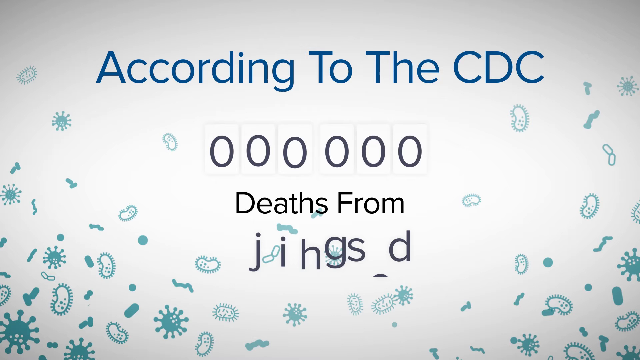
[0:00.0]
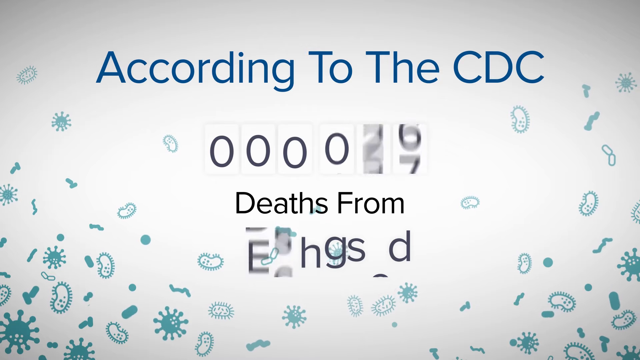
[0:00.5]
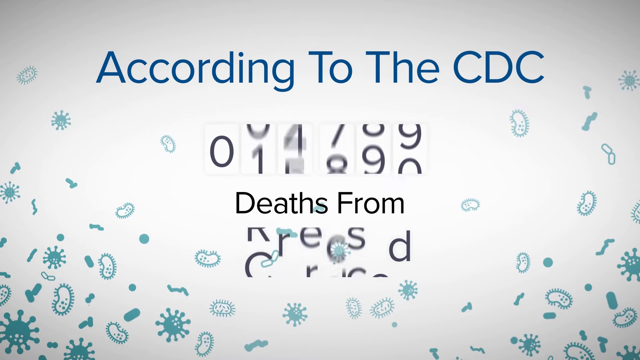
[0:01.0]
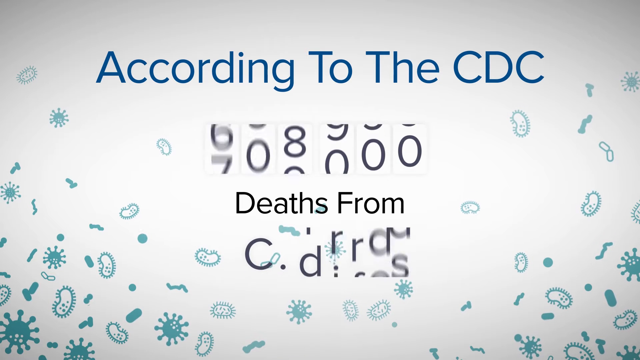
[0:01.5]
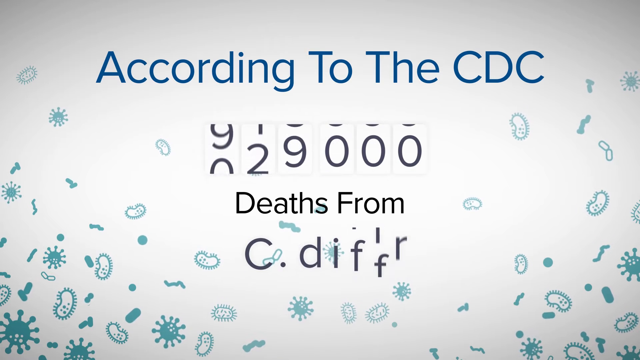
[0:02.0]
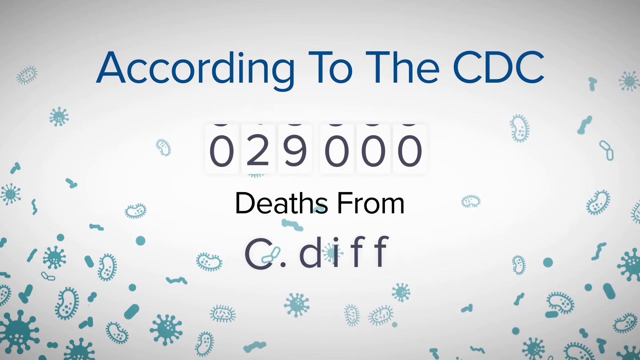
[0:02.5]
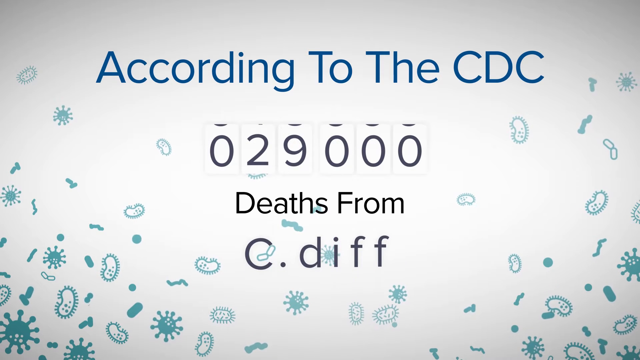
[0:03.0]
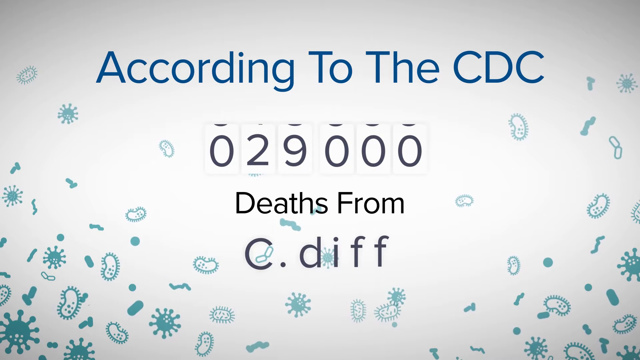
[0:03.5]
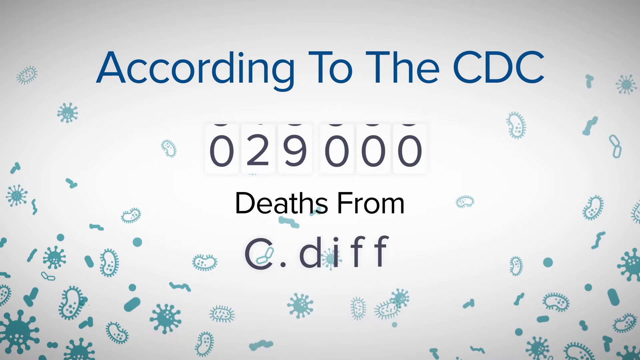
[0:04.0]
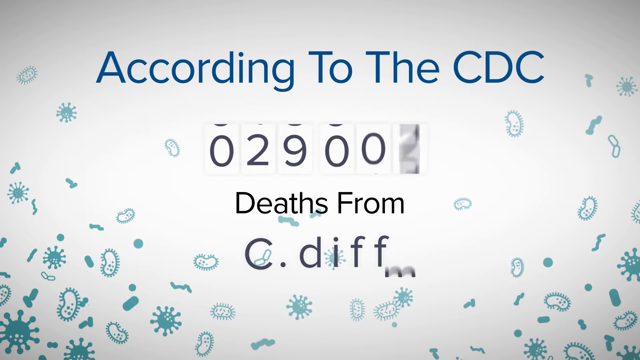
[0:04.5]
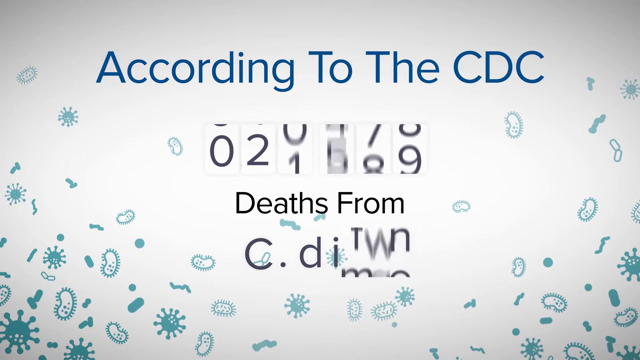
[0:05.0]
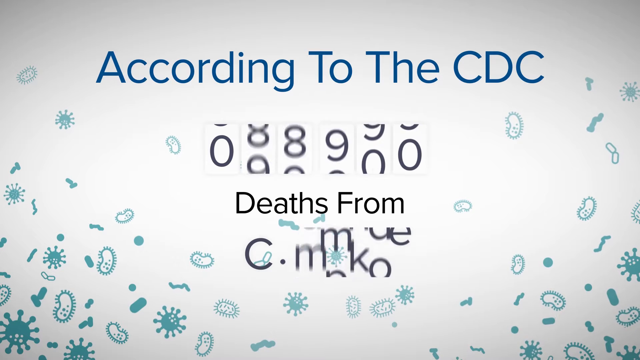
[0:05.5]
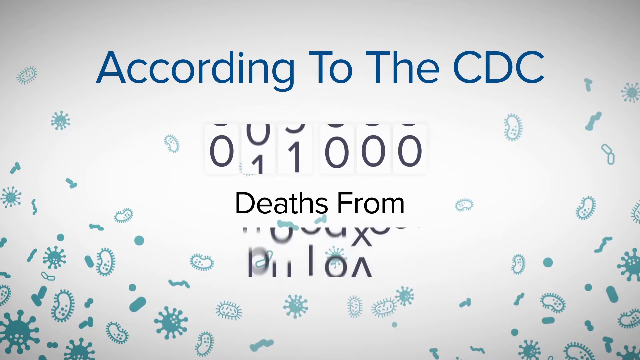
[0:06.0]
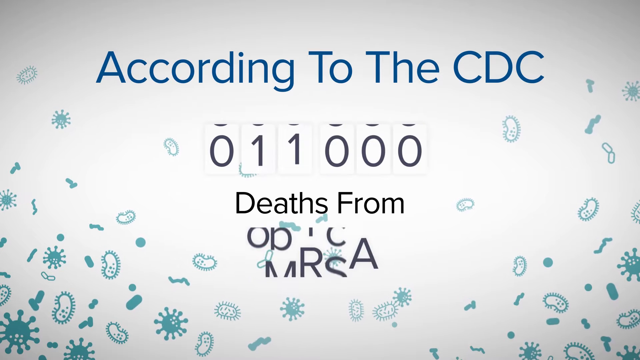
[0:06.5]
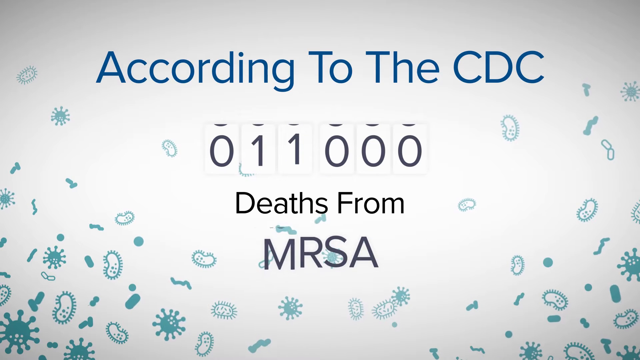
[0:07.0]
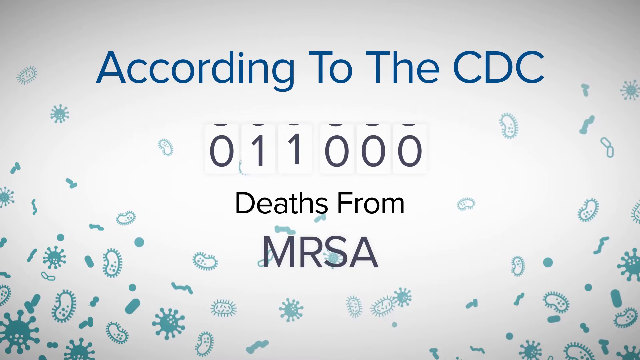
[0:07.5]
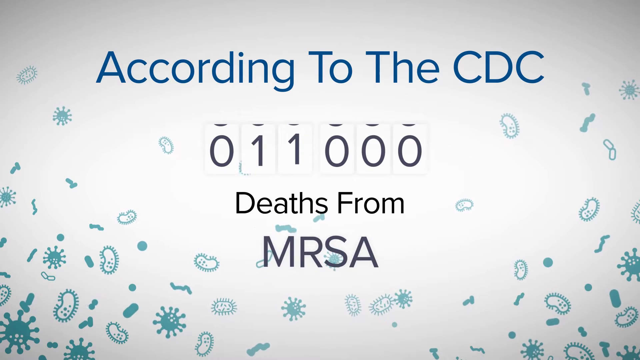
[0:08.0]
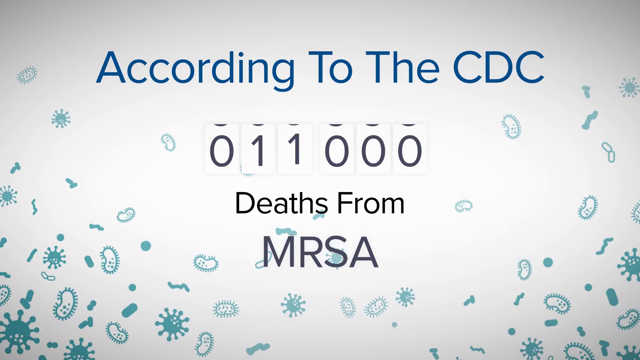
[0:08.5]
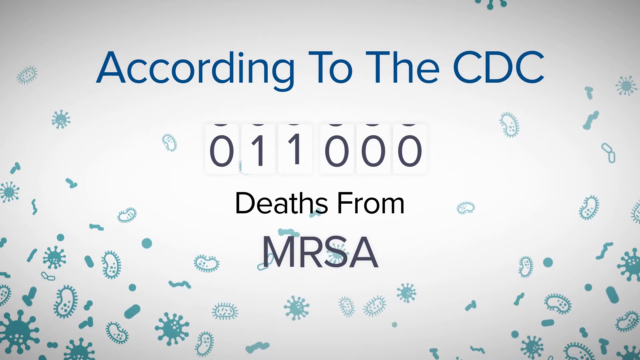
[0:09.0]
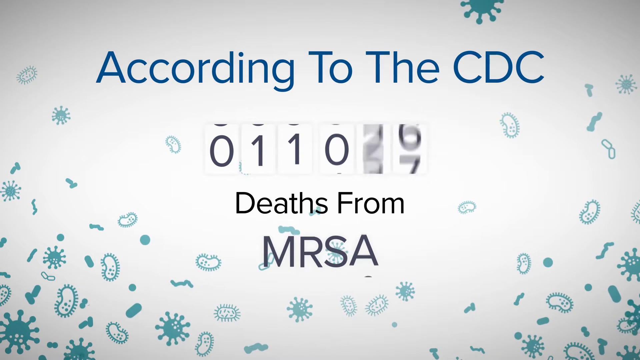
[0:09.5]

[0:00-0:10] Blue text at the top reads "according to the CDC." Below it is a counter showing zero zero zero, almost like a speedometer, with a place value underneath. It says "deaths from" followed by random jumbled letters. Little teal viruses are animated on the screen as well. The number jumbles up and settles on 29,000 deaths from a disease beginning with "C.", then jumbles again to 11,000. Different deaths, including deaths from MRSA, are listed in this animated way, presented matter-of-factly as strict statistical data.